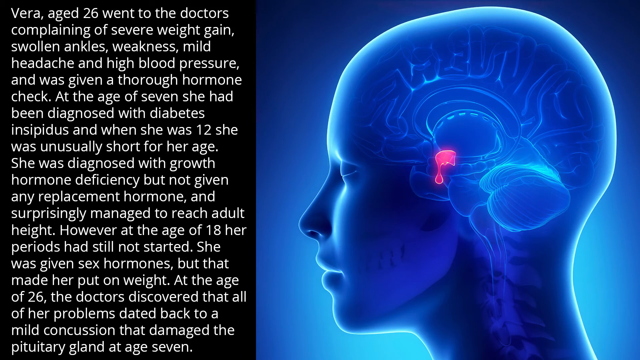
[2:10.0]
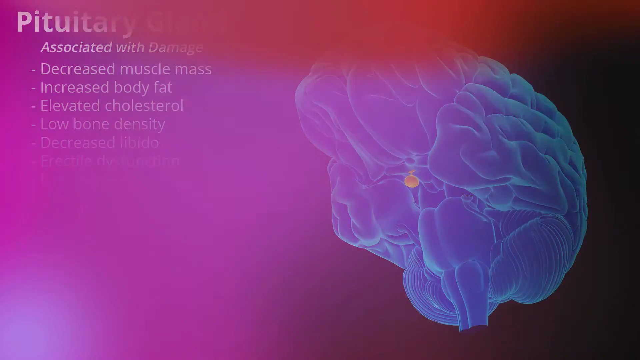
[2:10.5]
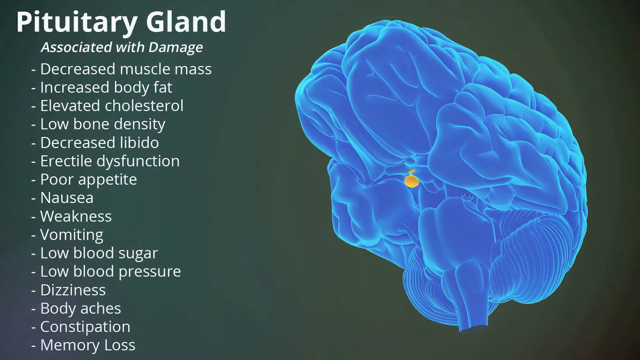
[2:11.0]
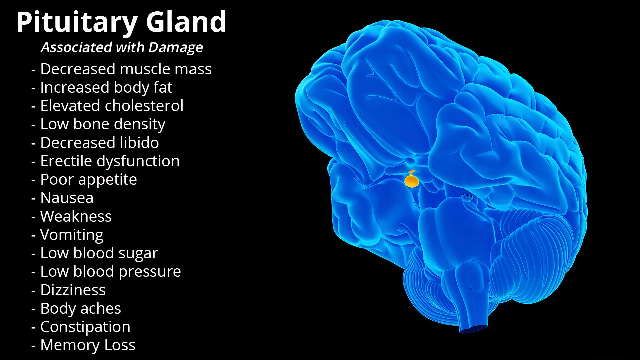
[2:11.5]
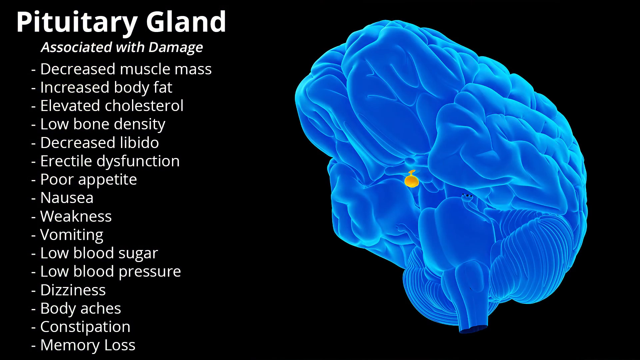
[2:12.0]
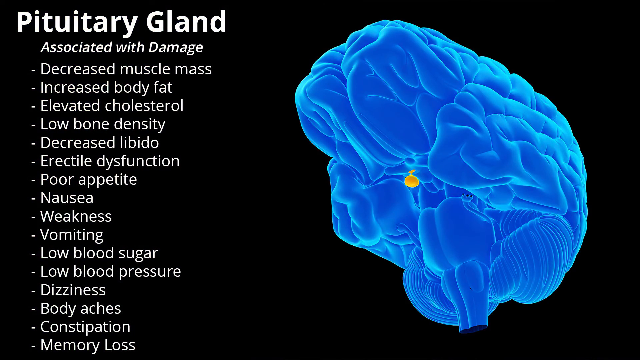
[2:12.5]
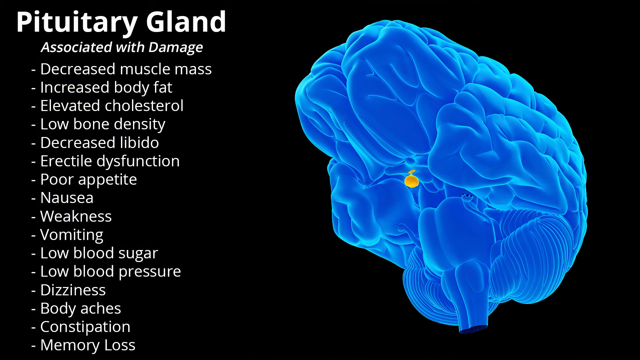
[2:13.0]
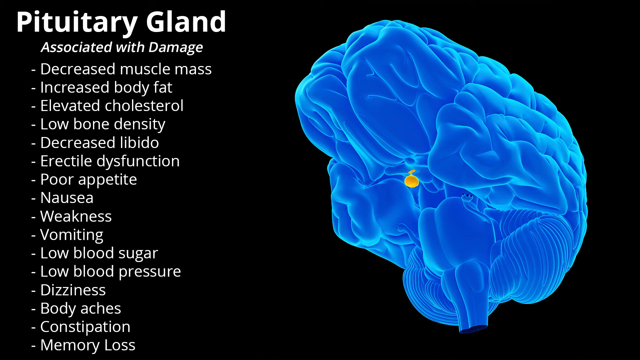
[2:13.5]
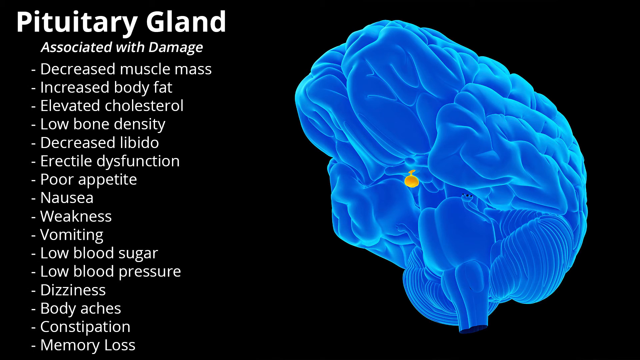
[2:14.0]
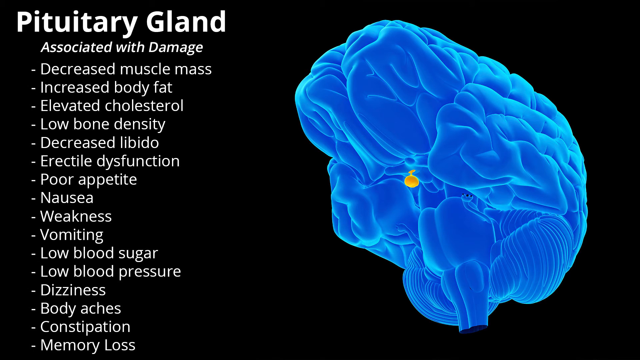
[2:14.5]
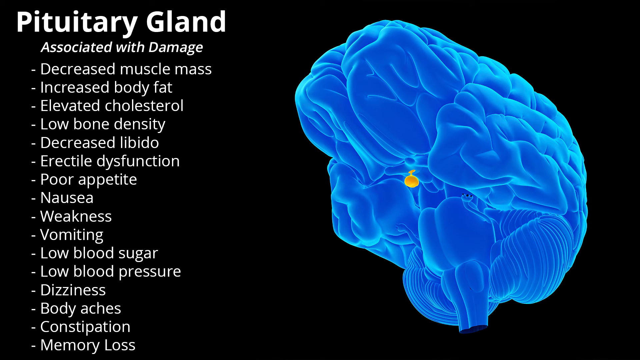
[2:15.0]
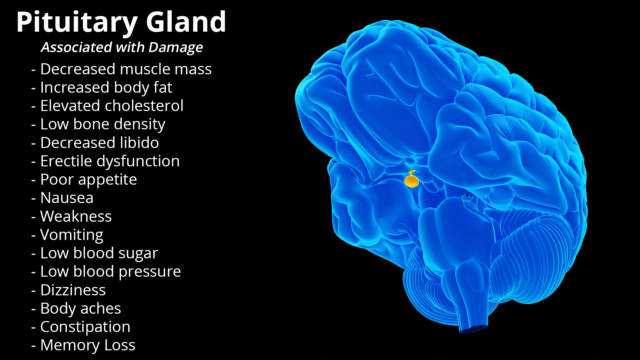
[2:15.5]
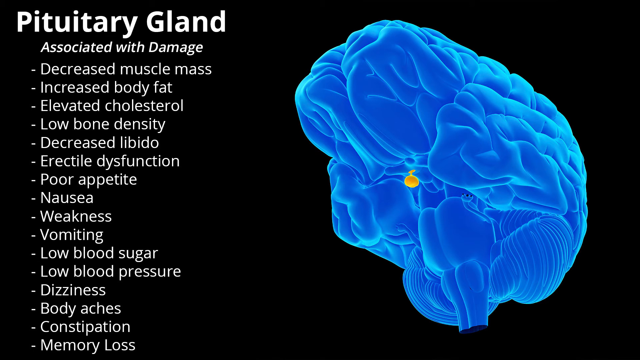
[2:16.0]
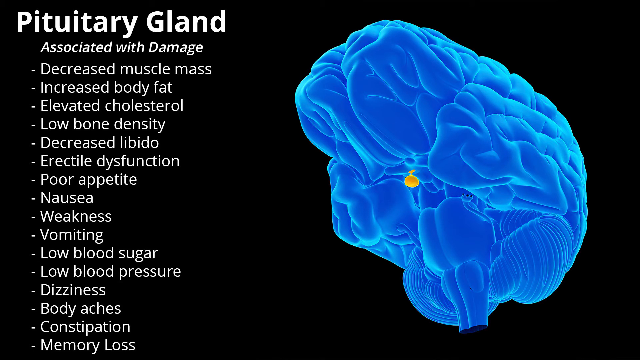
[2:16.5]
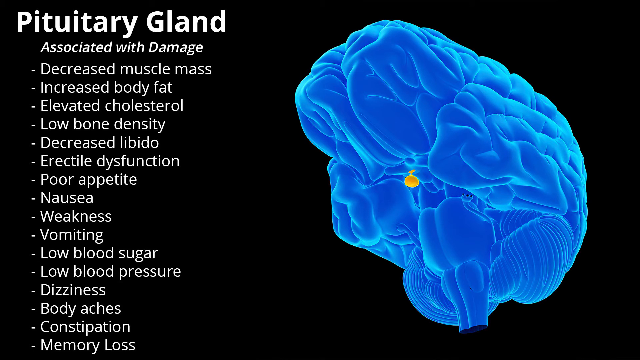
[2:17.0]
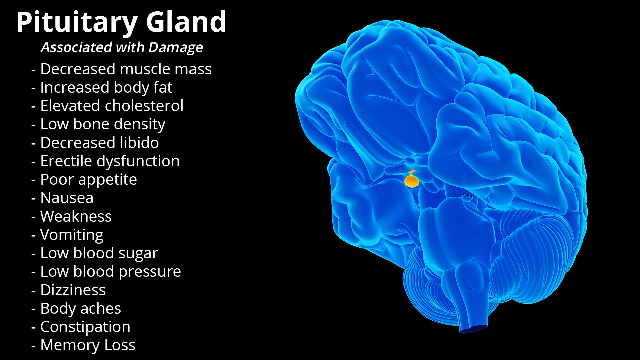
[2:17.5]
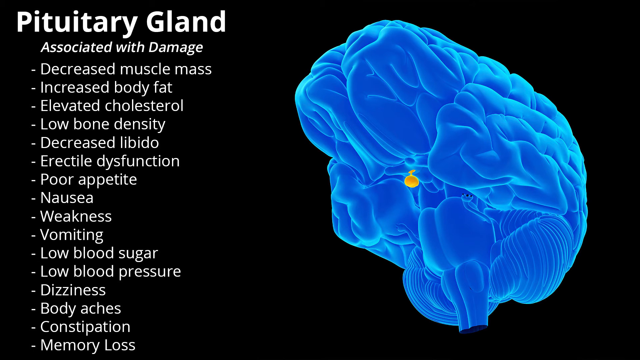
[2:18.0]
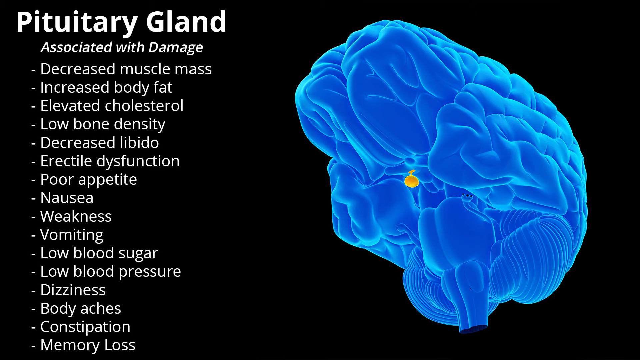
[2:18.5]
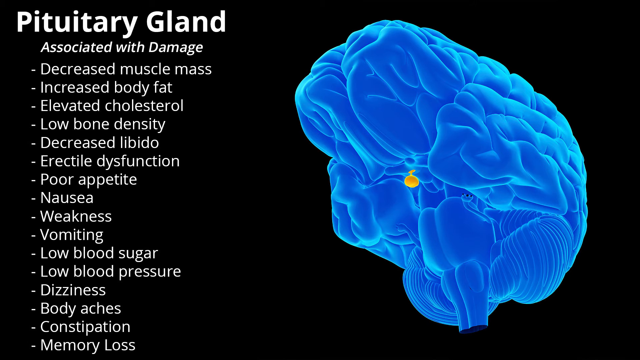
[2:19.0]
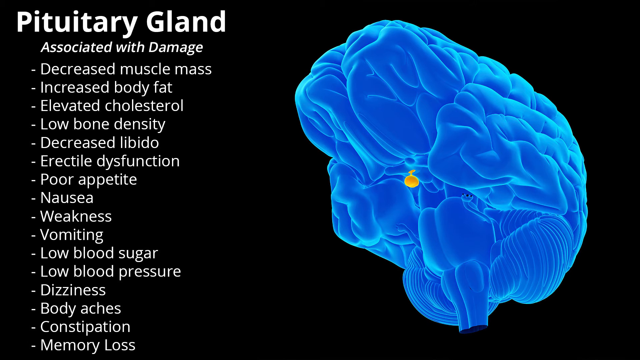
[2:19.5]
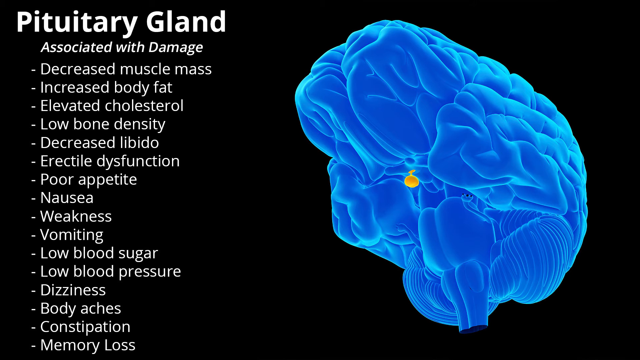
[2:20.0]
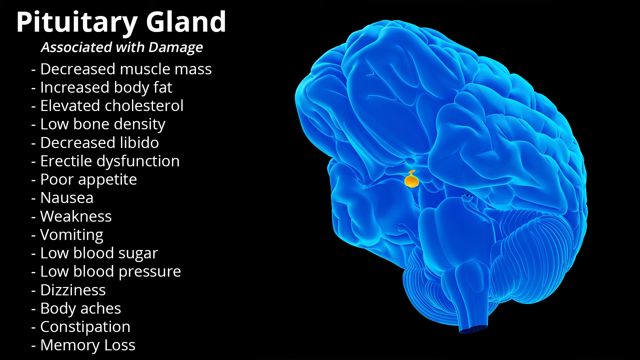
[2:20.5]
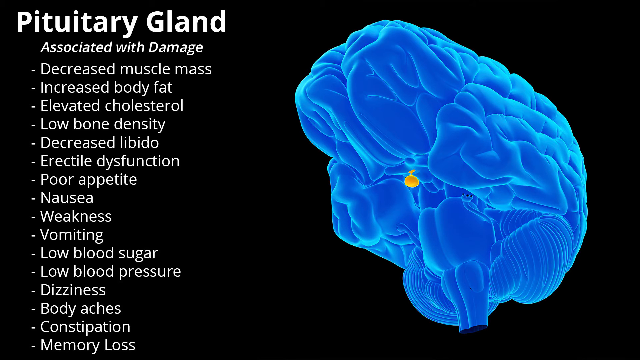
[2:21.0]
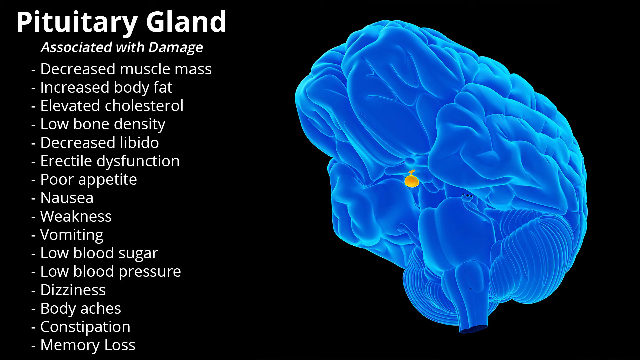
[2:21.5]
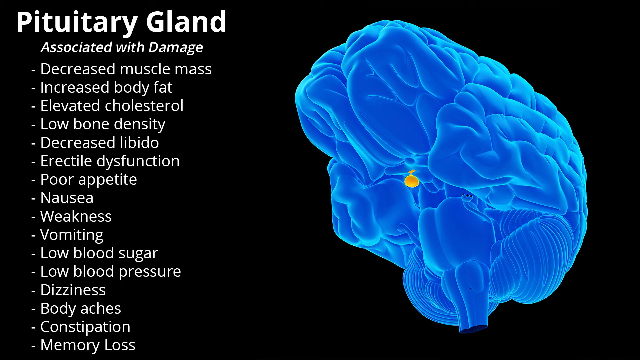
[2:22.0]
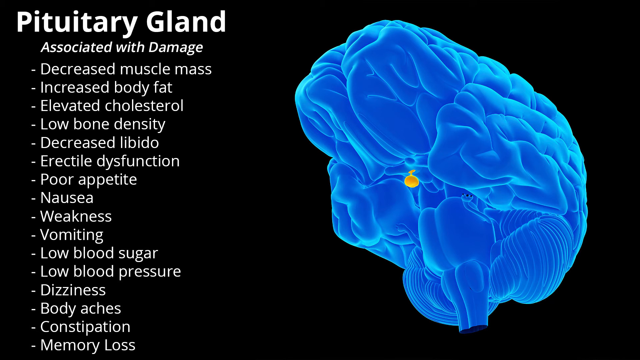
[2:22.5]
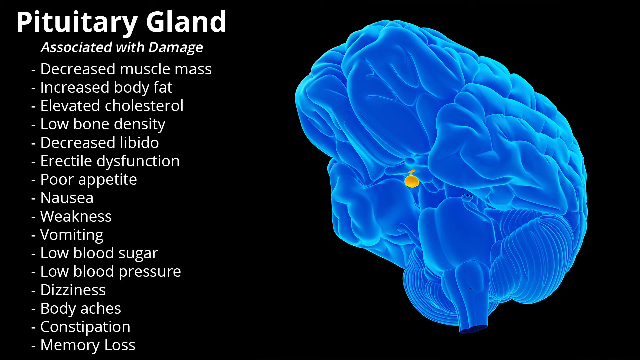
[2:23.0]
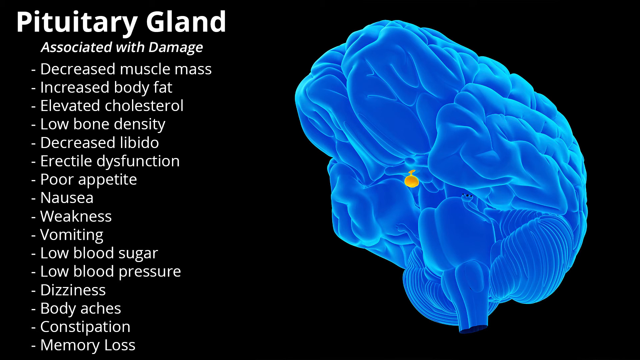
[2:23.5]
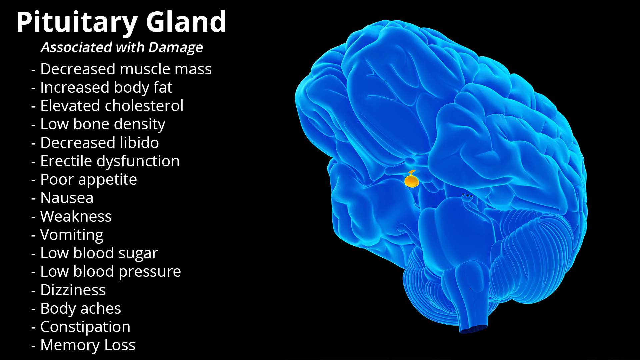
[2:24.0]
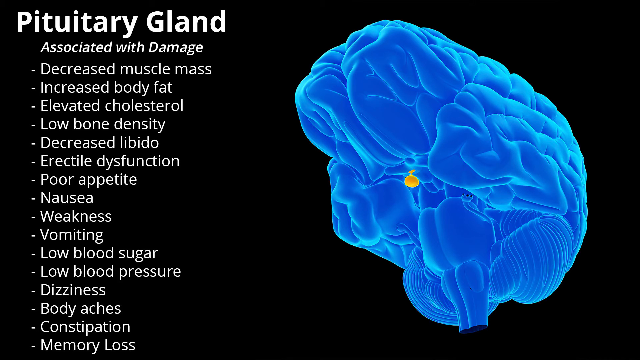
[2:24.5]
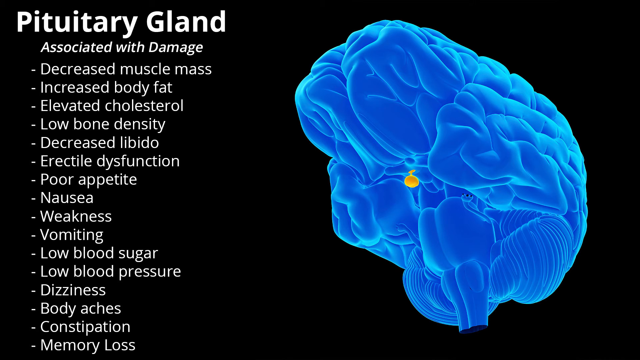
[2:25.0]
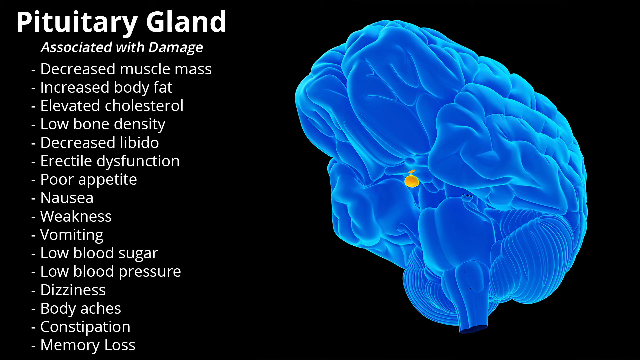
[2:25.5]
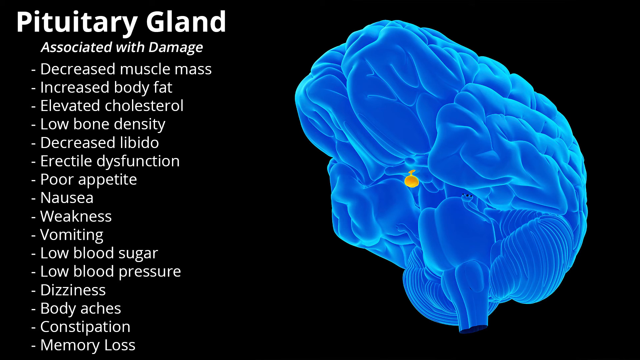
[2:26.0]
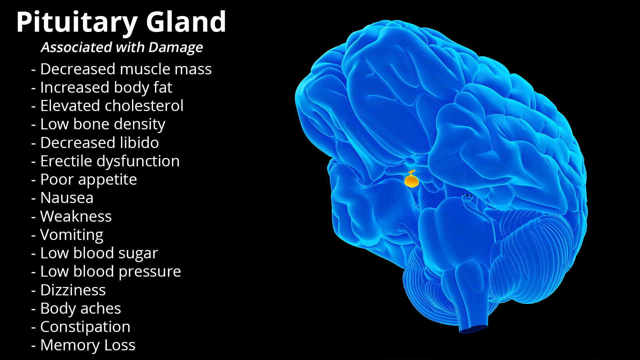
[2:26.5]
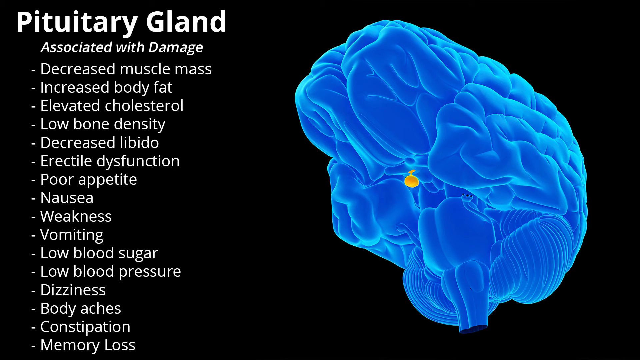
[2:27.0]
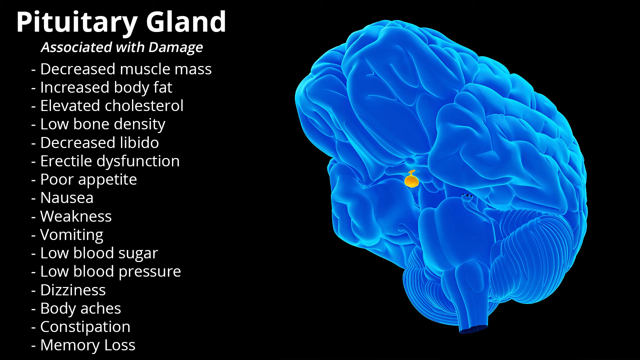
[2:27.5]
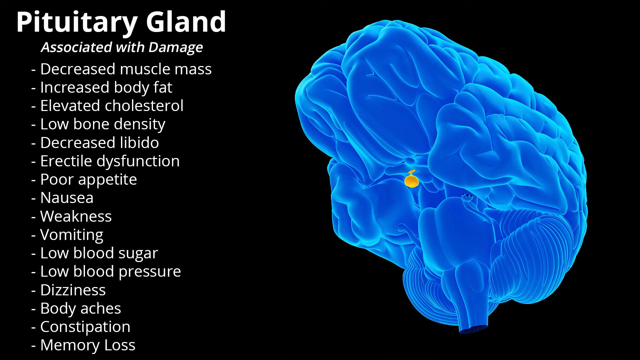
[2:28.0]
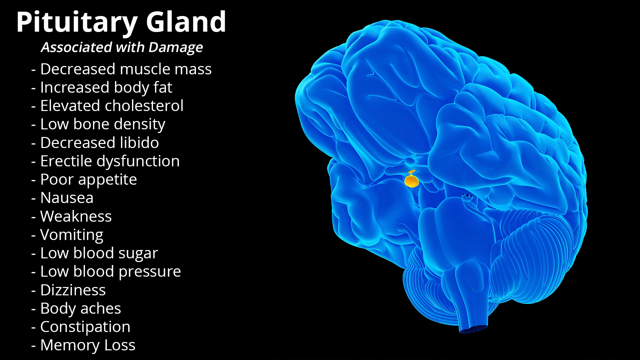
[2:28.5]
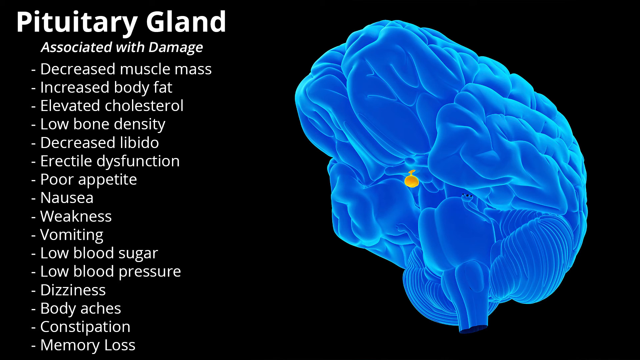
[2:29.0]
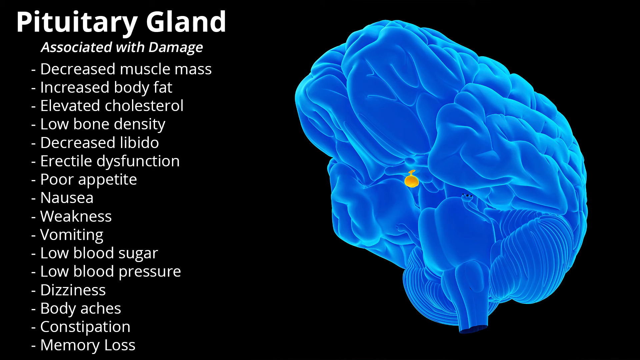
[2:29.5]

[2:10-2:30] The same static slide continues, with the screen divided into a left third of white text on a black background and a right two thirds of imagery. The text describes the case study of Vera, who is 26, went to the doctor and discovered damage to her pituitary gland, which led to a host of complicated symptoms. On the right is a computer-generated image of a genderless head looking to the left, with the brain visible through the skull and an area centered left and low marked as the pituitary gland. The screen then changes to a new slide titled "pituitary gland" with a list of symptoms associated with pituitary gland damage, and a different view of the brain that looks like it is seen from below, with the pituitary gland highlighted.